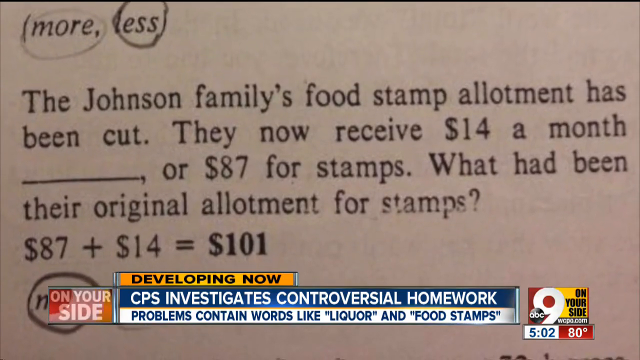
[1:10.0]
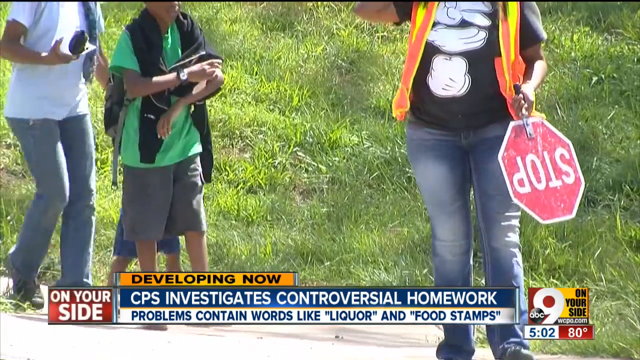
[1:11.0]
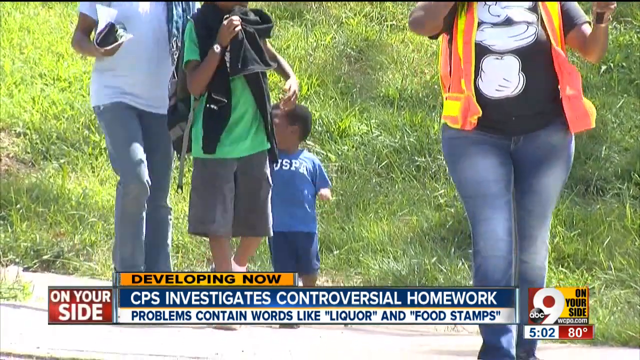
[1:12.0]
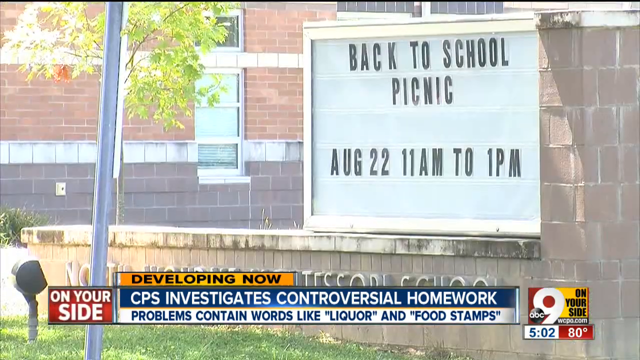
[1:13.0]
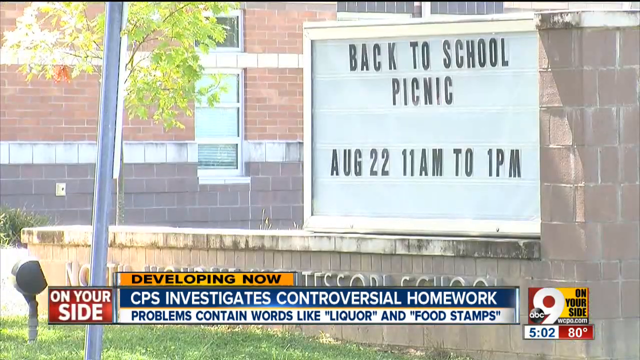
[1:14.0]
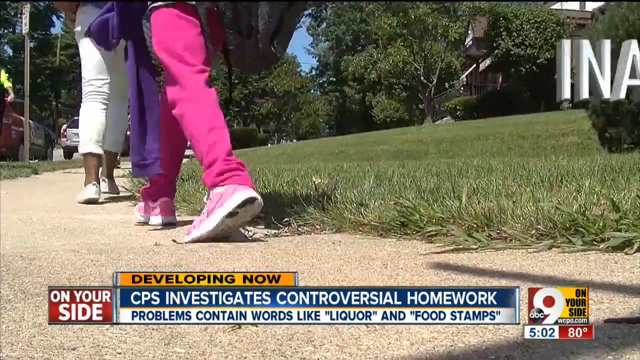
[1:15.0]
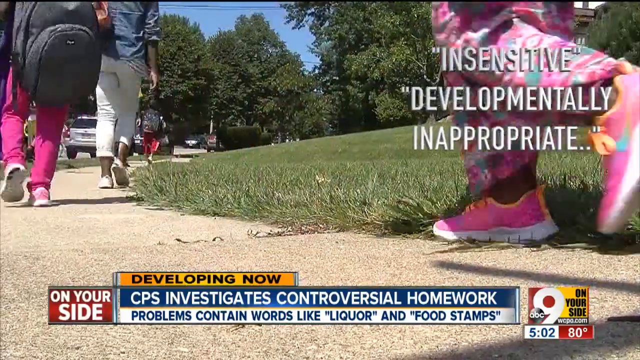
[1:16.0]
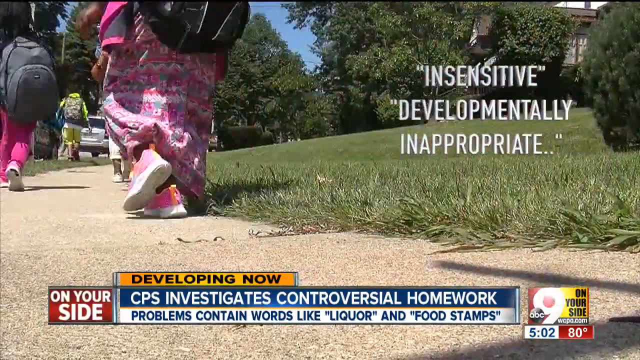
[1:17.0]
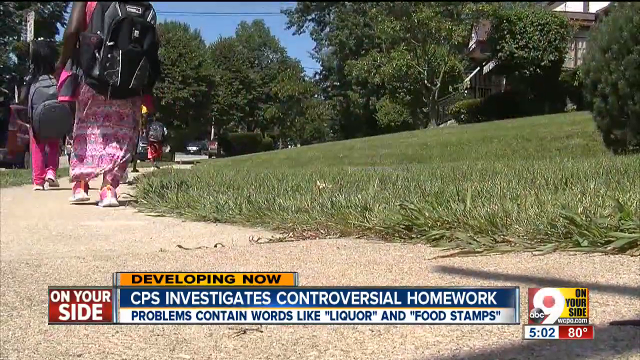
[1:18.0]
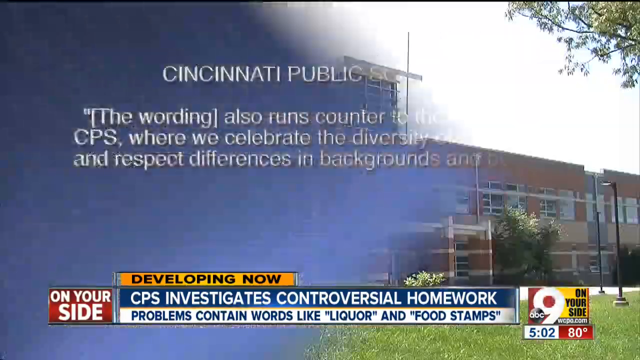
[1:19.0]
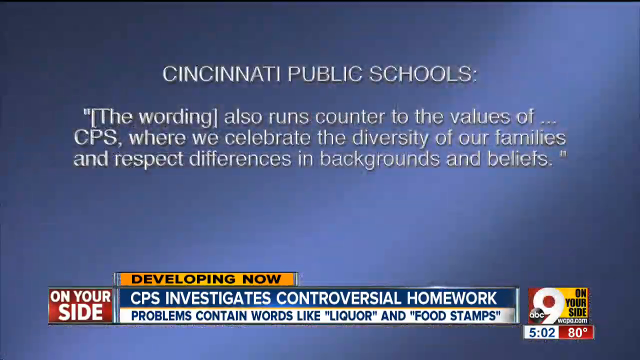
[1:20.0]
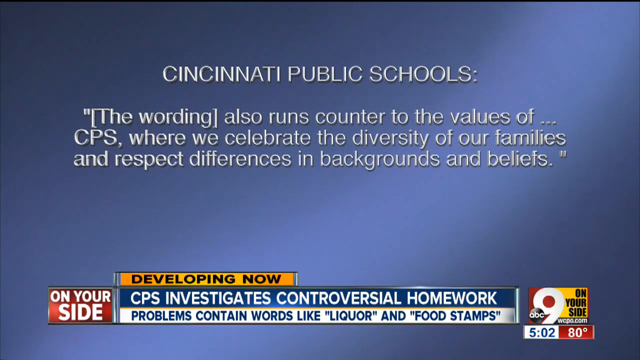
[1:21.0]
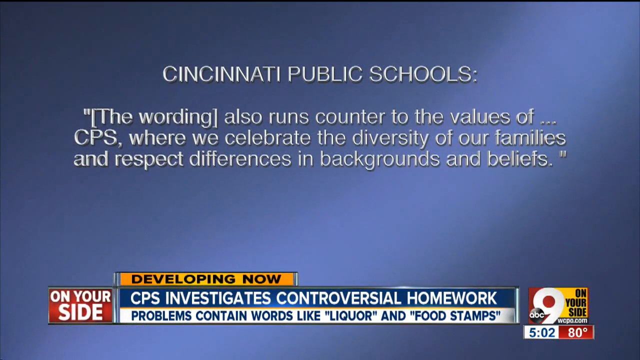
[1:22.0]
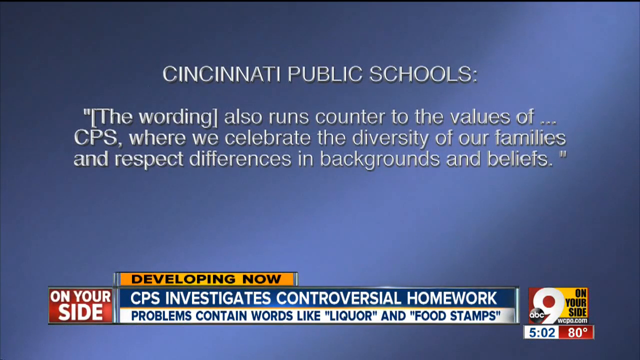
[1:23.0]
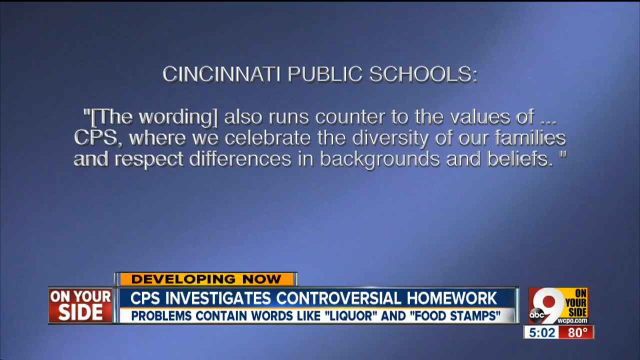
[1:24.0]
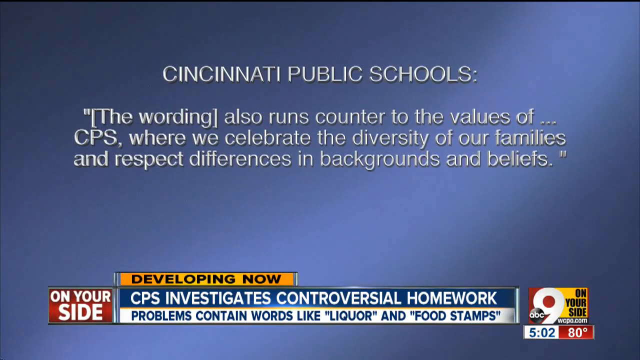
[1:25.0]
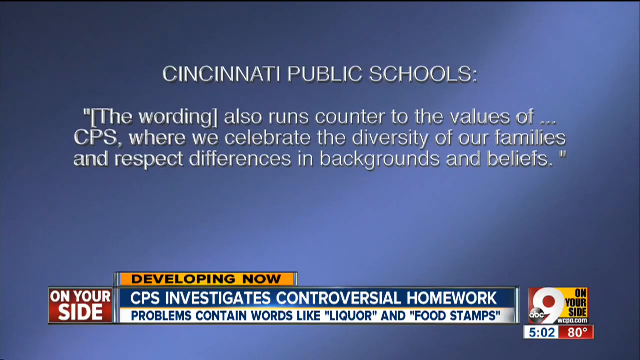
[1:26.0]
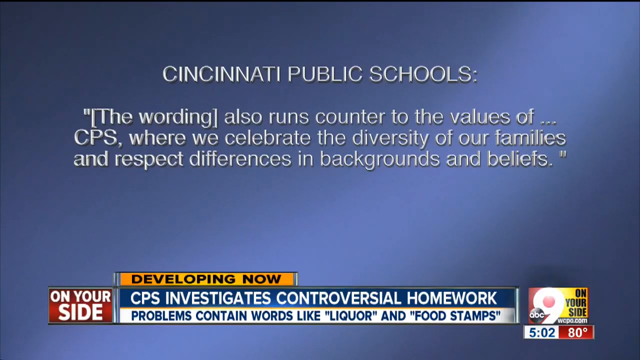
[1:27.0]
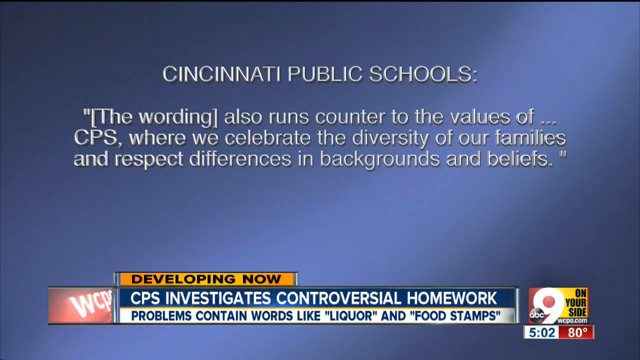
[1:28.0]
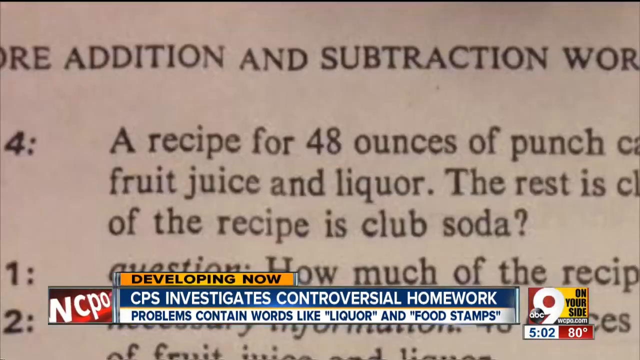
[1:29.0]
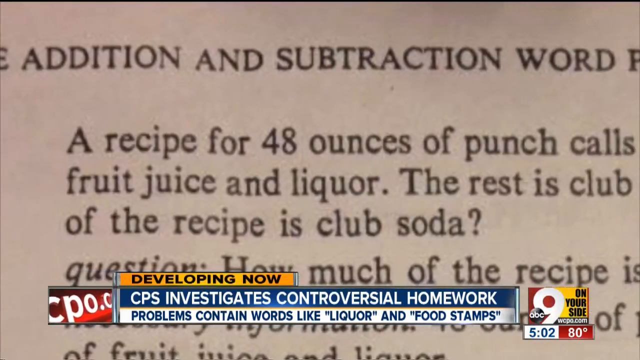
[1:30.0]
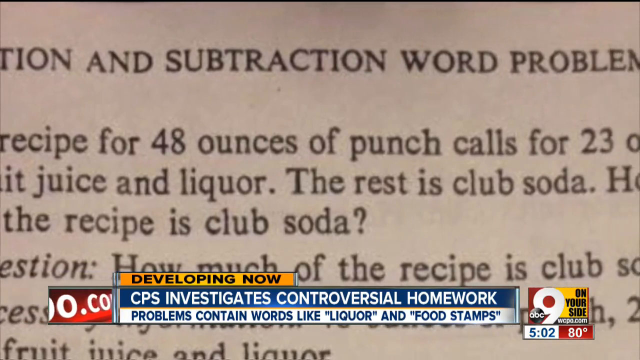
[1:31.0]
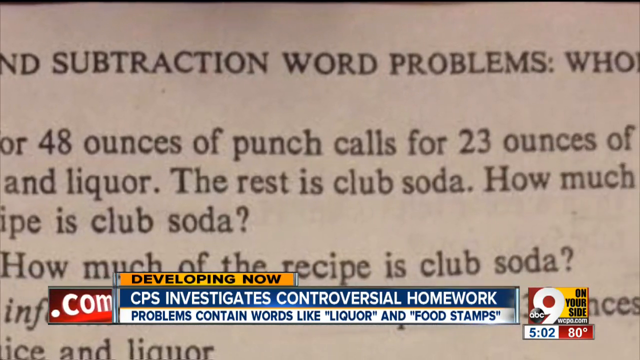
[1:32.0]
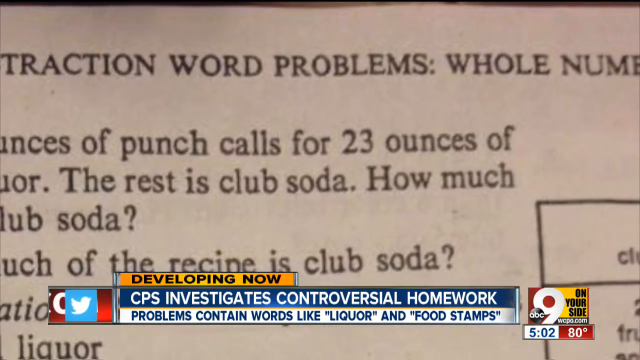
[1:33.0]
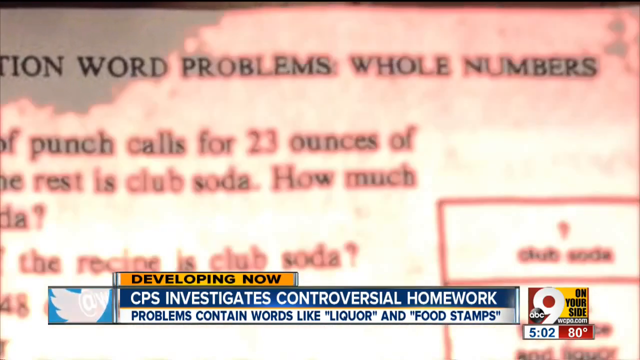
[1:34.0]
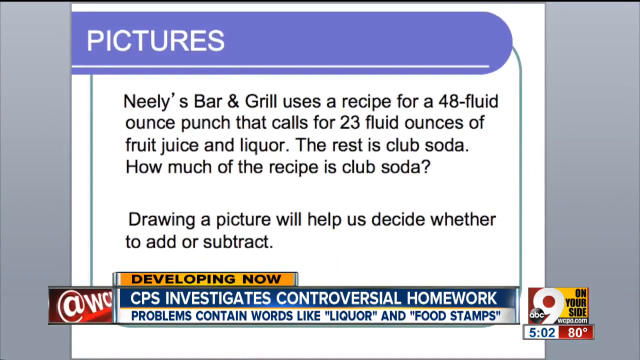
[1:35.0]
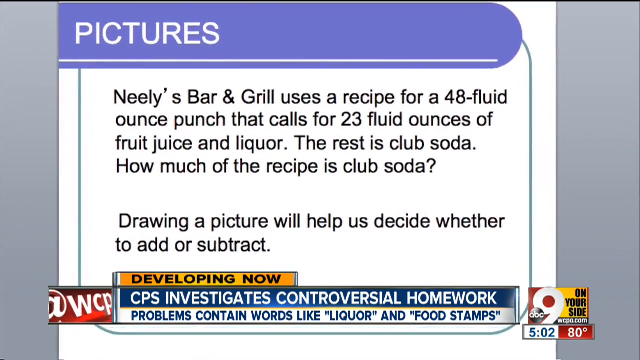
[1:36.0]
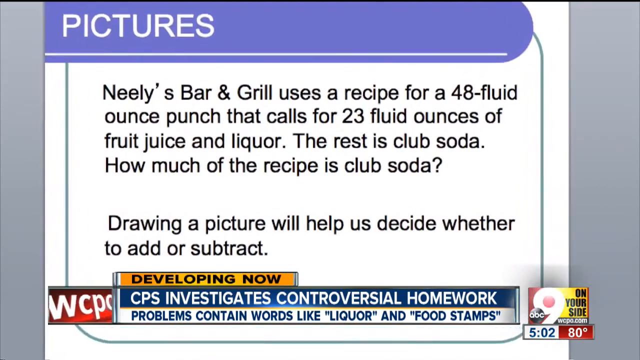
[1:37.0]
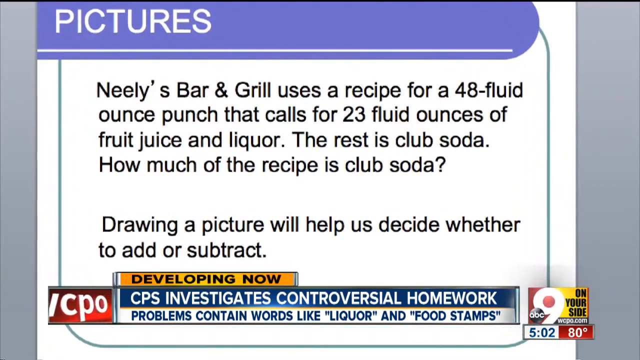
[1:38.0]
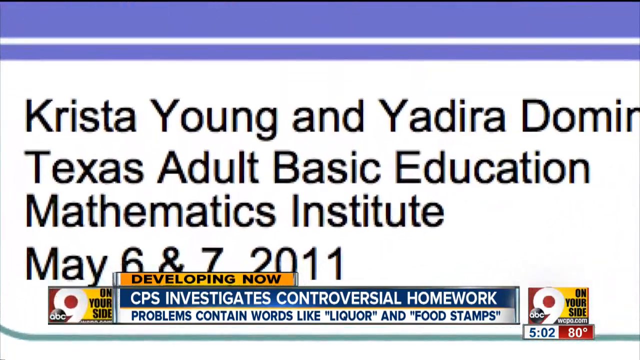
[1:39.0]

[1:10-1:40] The news program shows "developing now" and "CPS investigates controversial homework." A math problem is shown before a cut to what appear to be three people walking: a small child, another child and possibly a parent in a white shirt. A crossing guard is present. An exterior of a school follows, with a sign reading "back to school picnic August 22nd 11 a.m. to 1 p.m." and a tree whose leaves blow in the wind. People walk along the sidewalk, and text reads "insensitive, developmentally inappropriate." Another person walks as the text goes away. Text beginning "Cincinnati Public Schools" then appears, including the words "where we celebrate the diversity of our families and respect differences in backgrounds and beliefs," on kind of a gray background, and it stays on before a cut to a word problem. The view pans from left to right across the problem. "Pictures" then pops up at the top, with what appears to be another word problem; the view zooms in on that, and then zooms in on text that says "Texas Adult Basic Education."